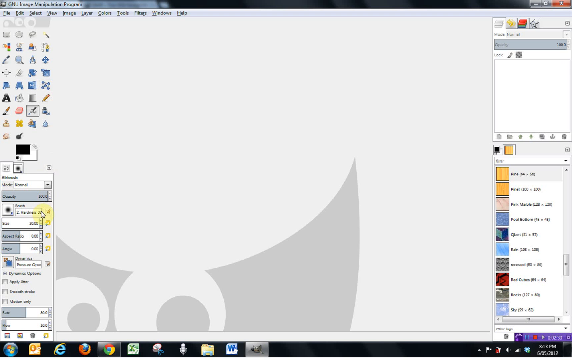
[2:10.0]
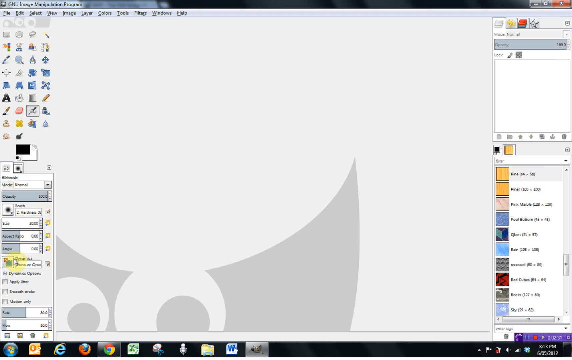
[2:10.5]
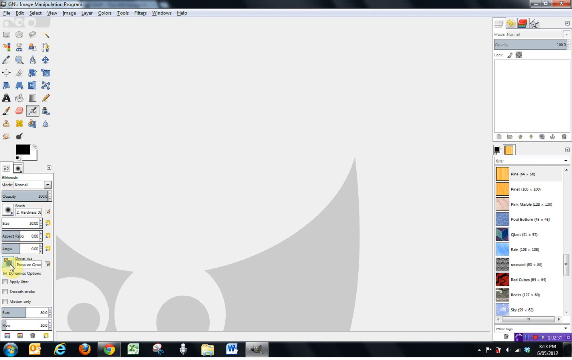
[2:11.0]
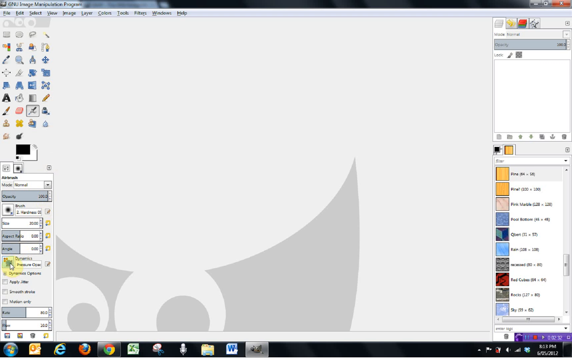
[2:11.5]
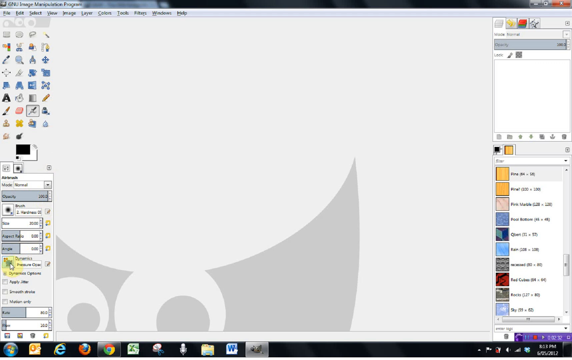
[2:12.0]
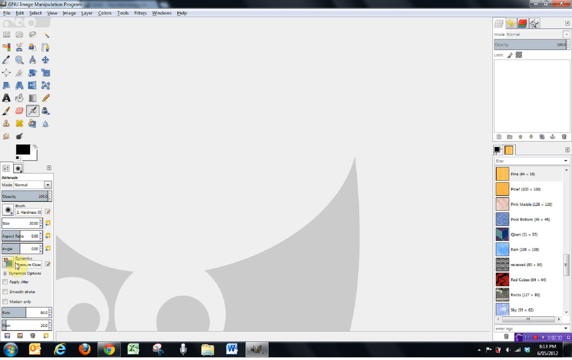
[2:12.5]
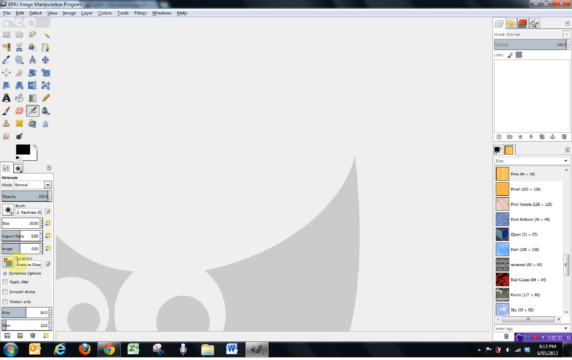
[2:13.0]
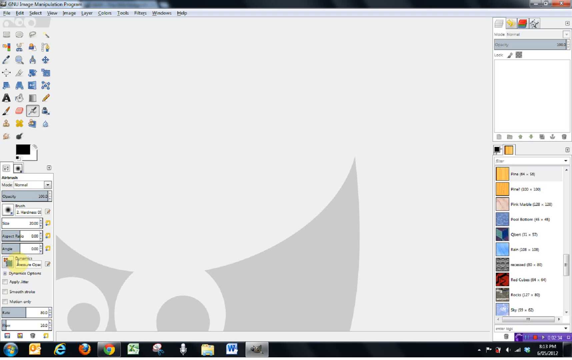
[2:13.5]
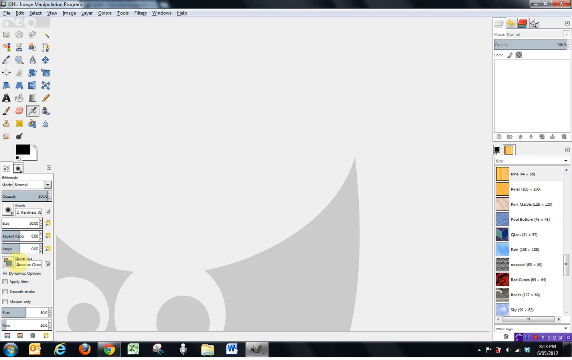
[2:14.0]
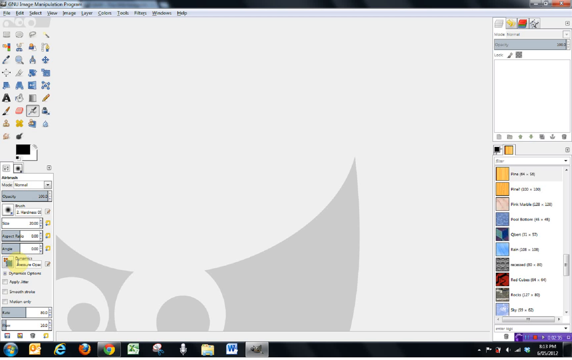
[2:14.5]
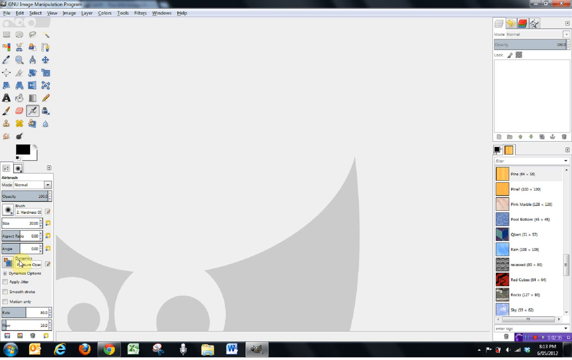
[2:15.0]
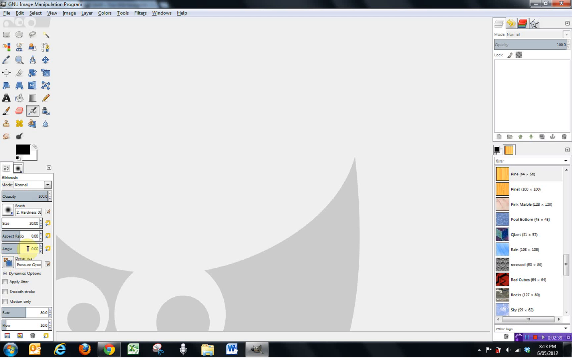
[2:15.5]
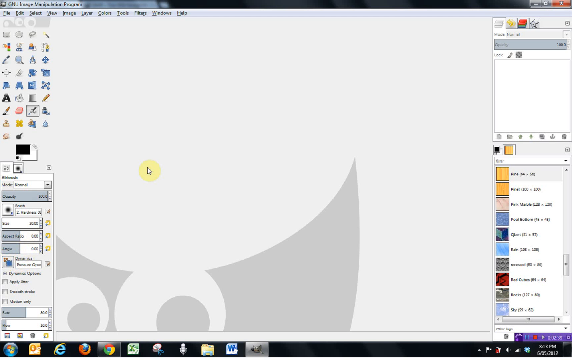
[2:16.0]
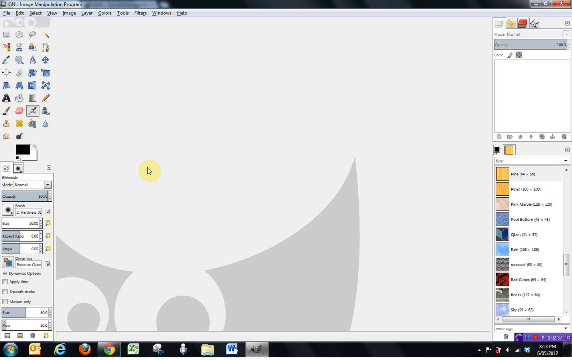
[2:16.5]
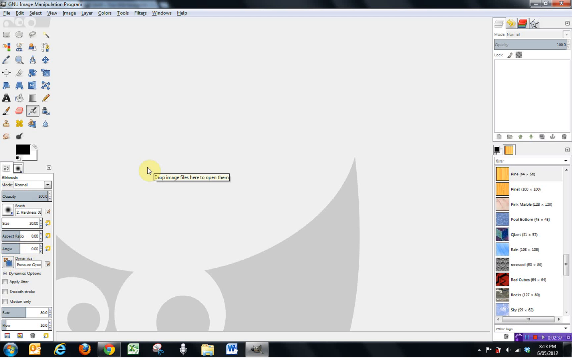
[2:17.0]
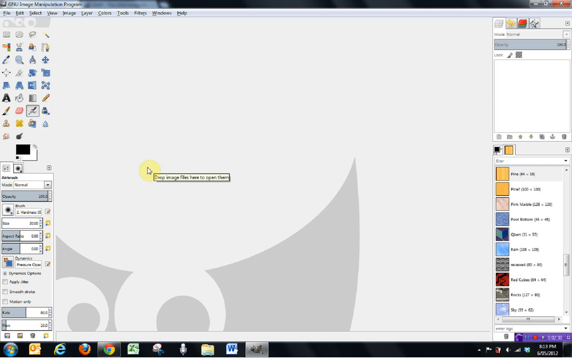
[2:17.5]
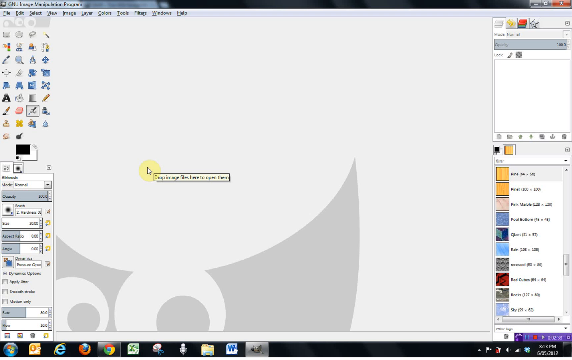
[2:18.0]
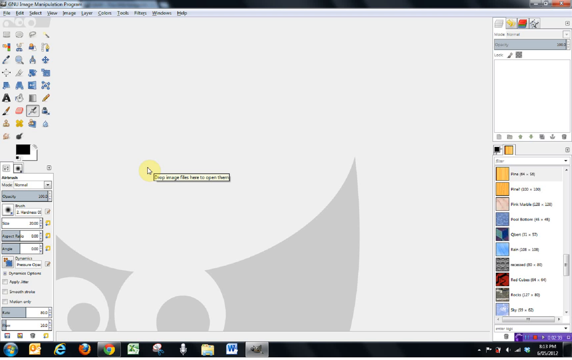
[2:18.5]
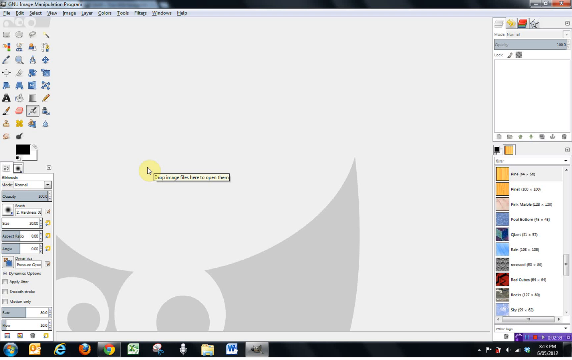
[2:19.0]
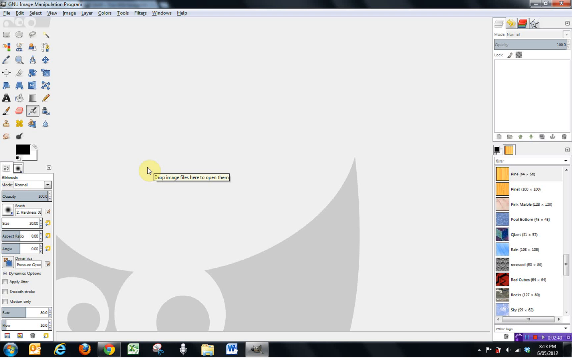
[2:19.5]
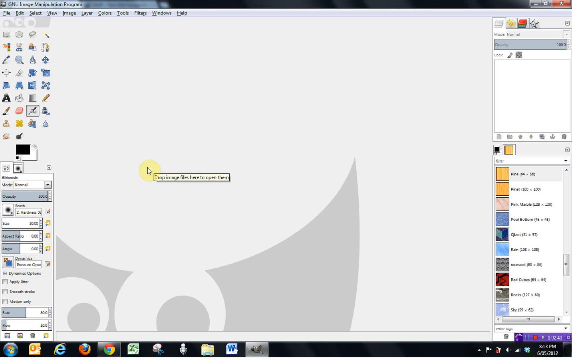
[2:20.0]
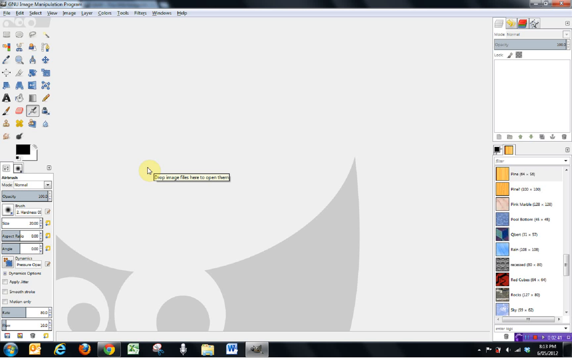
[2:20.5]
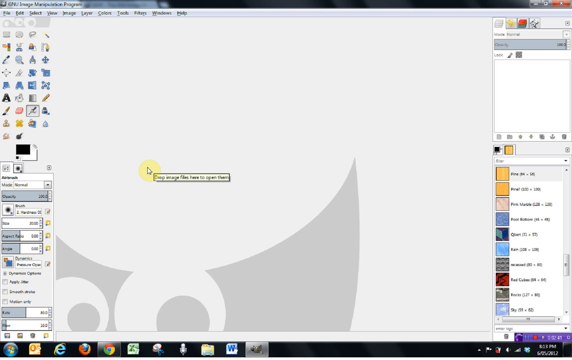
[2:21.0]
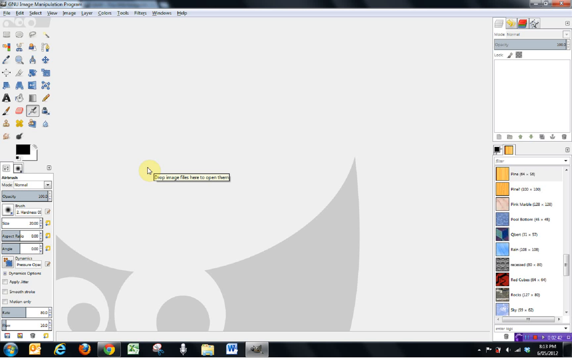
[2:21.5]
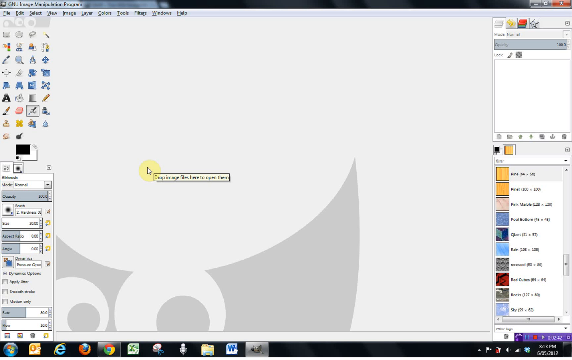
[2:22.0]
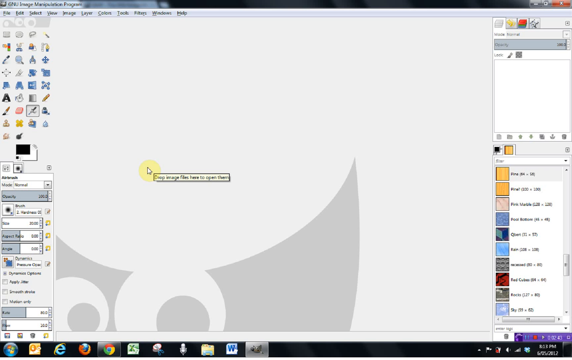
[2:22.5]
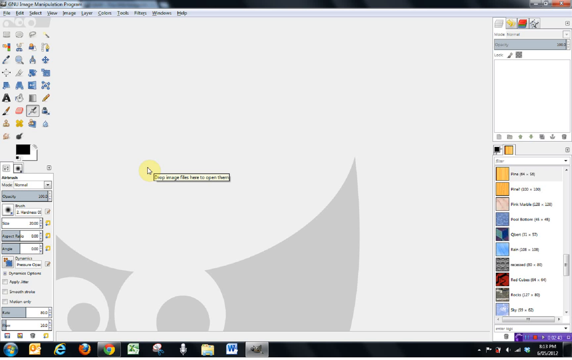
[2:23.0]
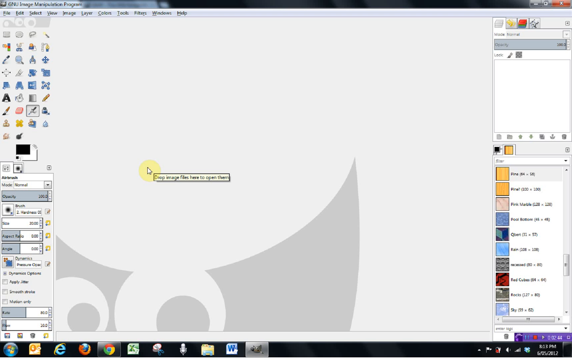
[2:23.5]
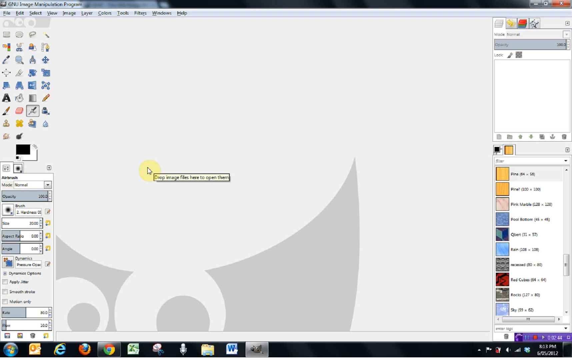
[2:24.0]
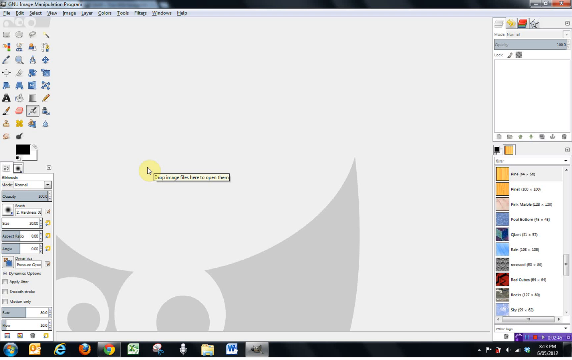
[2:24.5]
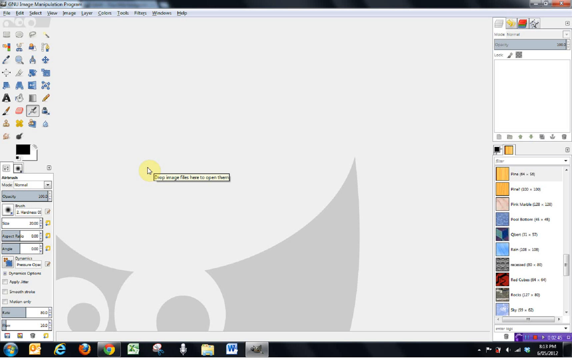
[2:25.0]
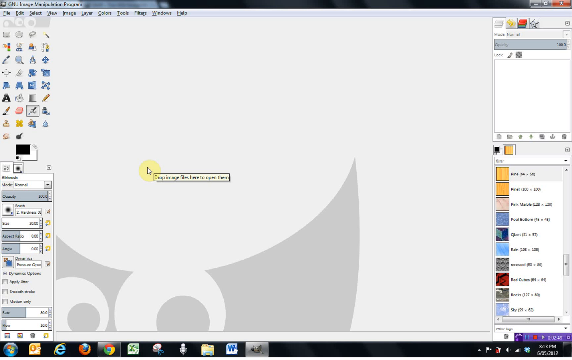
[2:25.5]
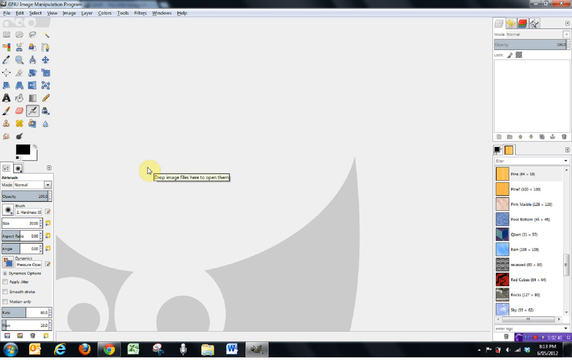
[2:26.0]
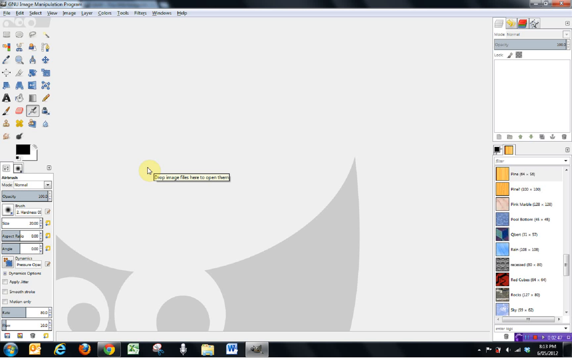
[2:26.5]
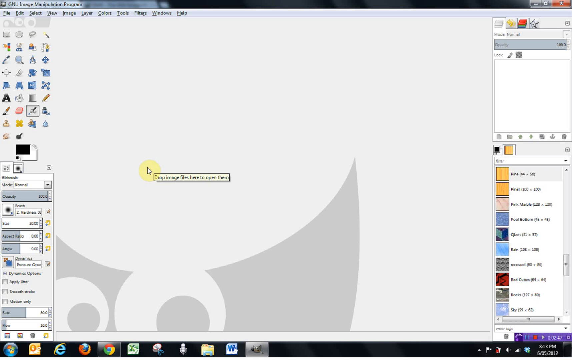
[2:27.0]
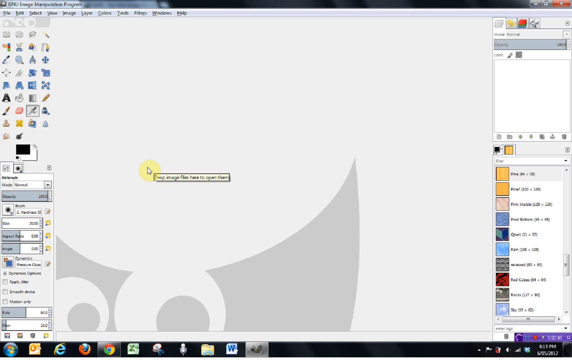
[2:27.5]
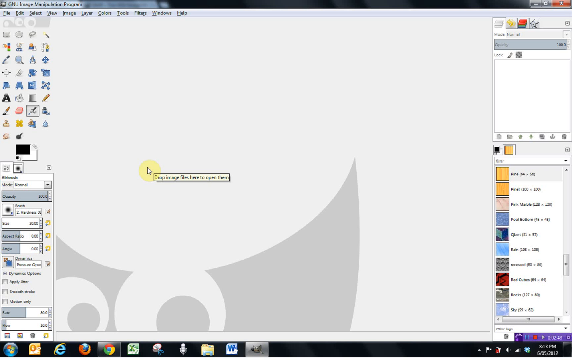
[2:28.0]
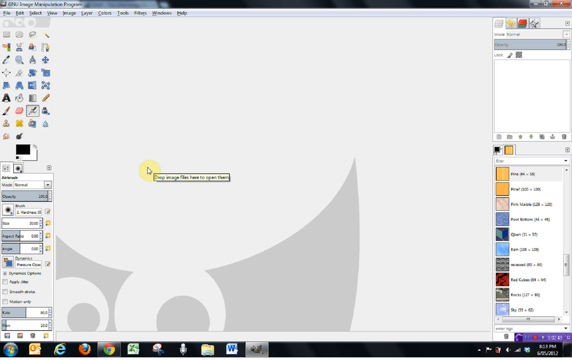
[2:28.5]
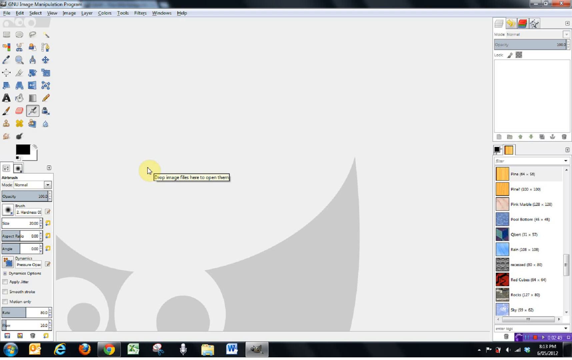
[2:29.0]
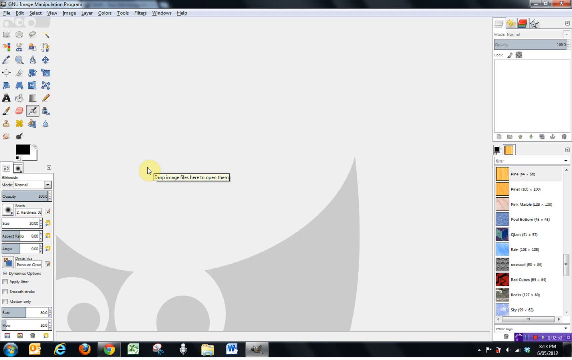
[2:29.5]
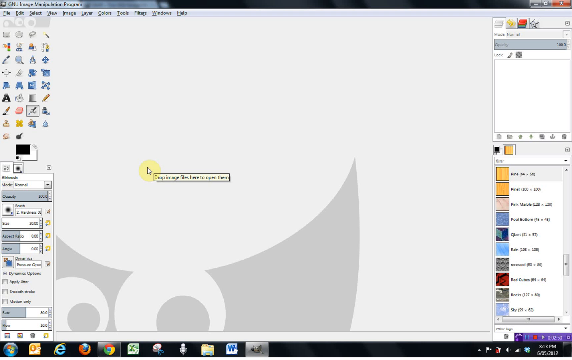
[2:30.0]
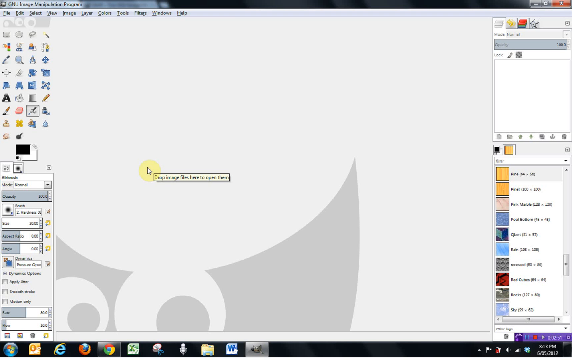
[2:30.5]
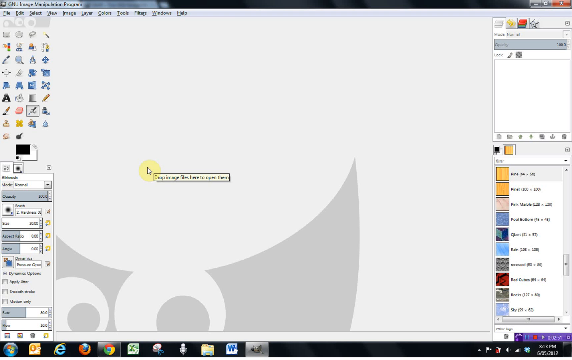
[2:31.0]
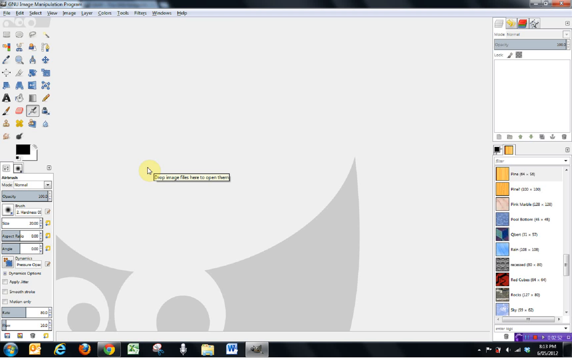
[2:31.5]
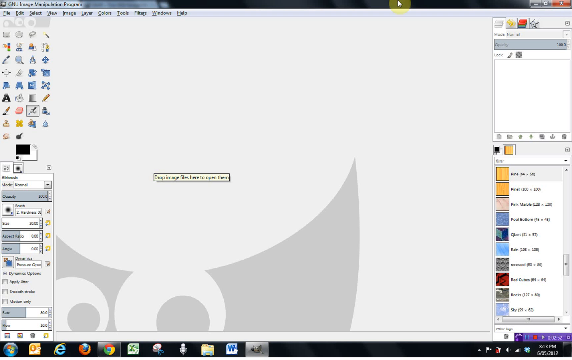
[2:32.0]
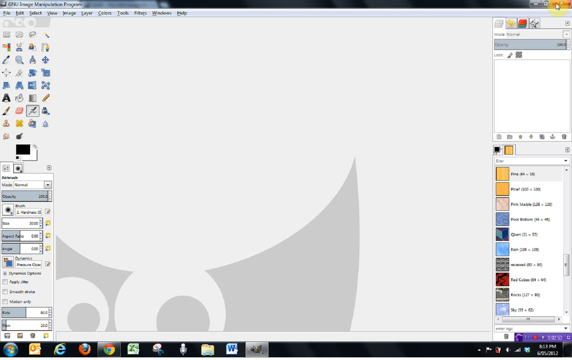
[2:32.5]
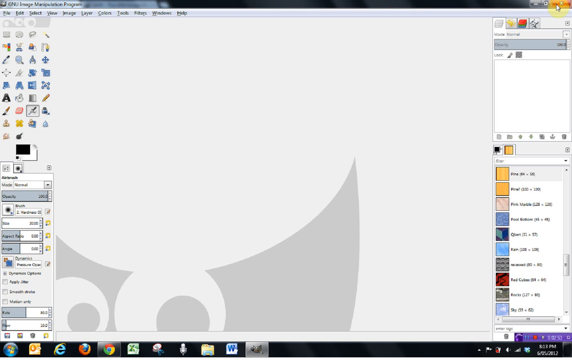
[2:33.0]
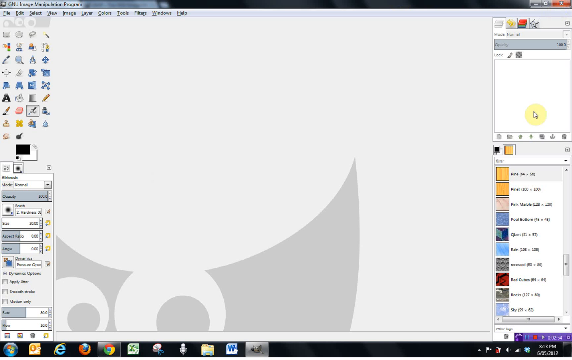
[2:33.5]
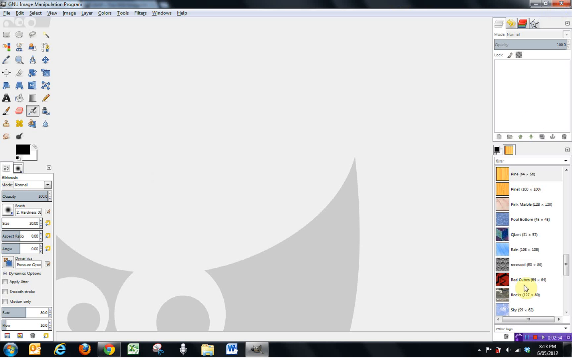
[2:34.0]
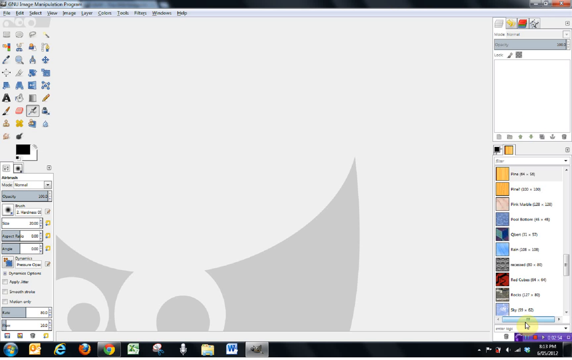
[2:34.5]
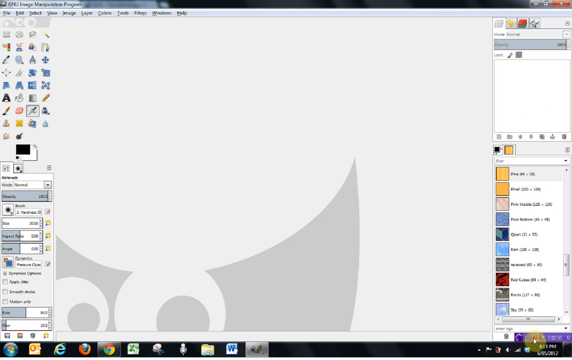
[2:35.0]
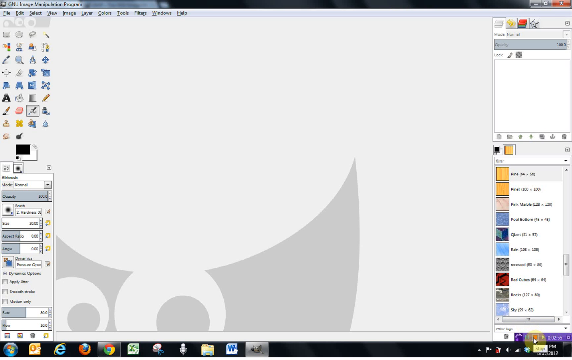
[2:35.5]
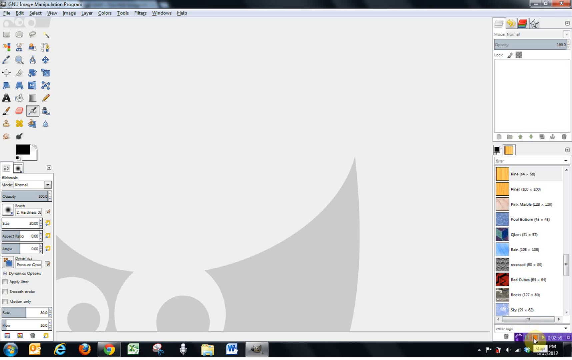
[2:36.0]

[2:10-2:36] After the tool is selected and a small icon at the bottom is clicked, the screen stays mostly the same. Some text pops up in the middle, and the mouse hovers in the middle without much happening. The mouse then moves quickly somewhere to the right, maybe toward the bottom. Later it goes up to the X in the far upper right, then comes back down to the bottom right.